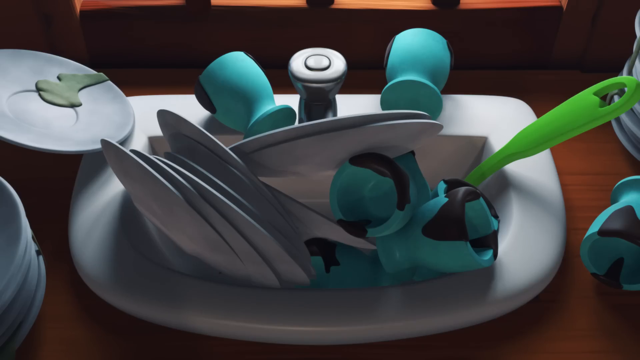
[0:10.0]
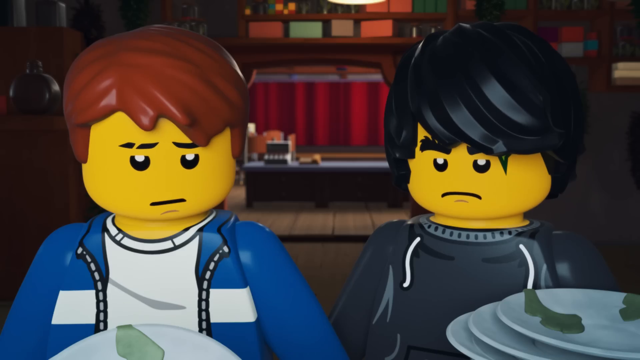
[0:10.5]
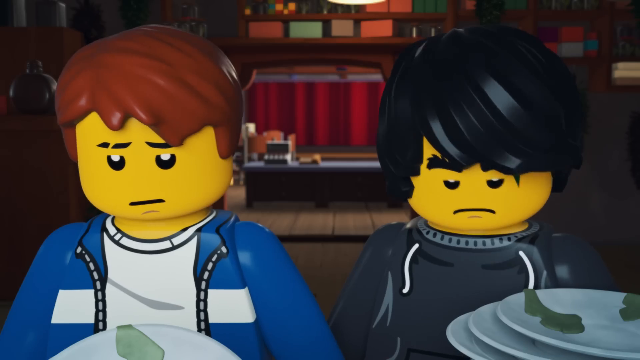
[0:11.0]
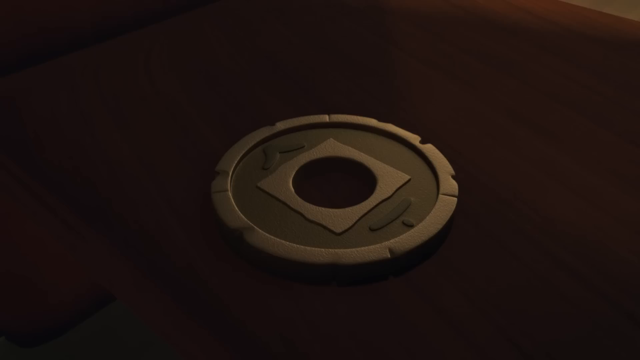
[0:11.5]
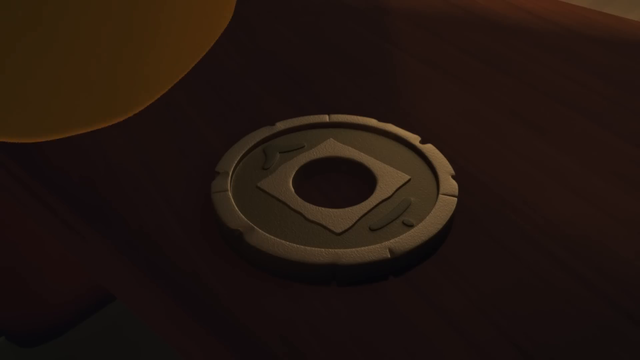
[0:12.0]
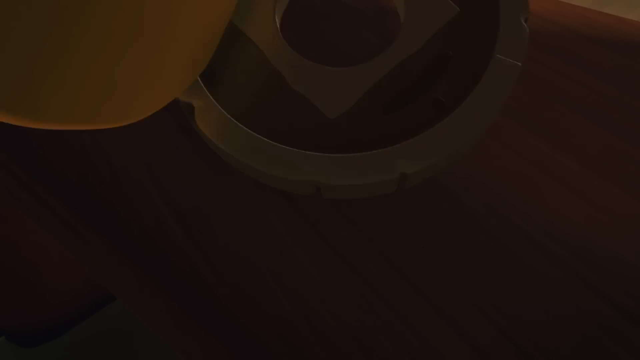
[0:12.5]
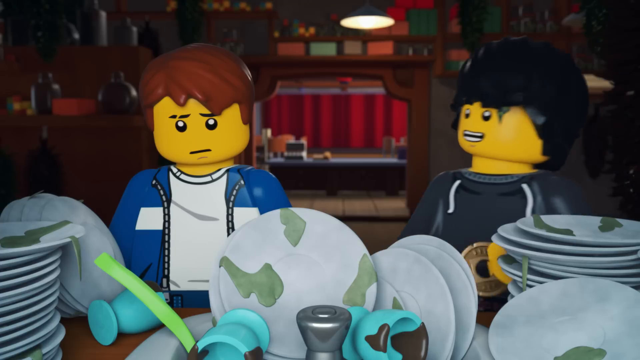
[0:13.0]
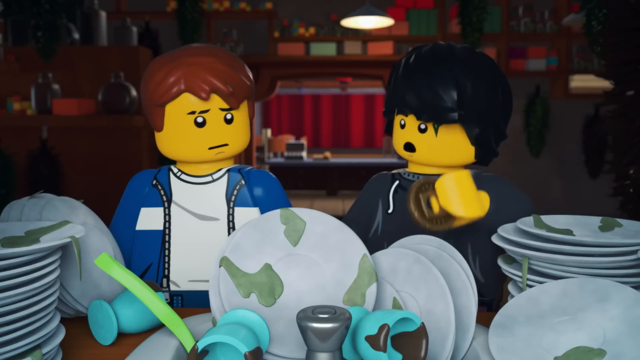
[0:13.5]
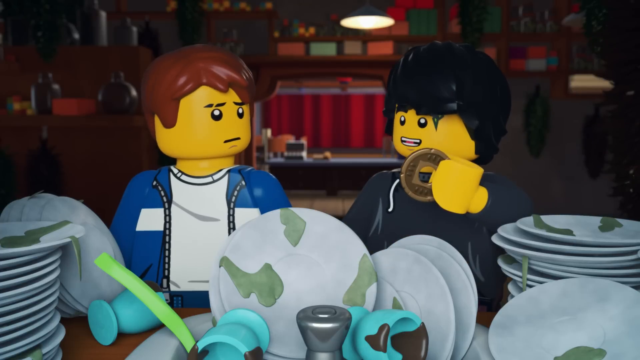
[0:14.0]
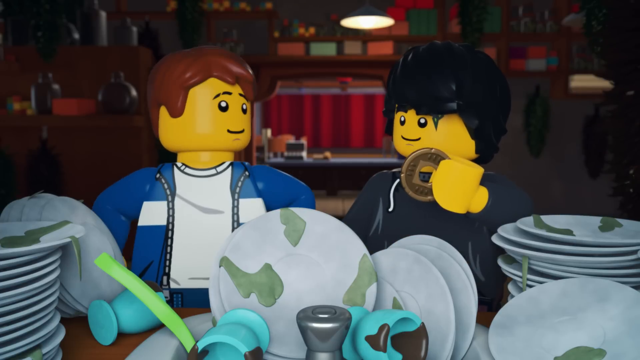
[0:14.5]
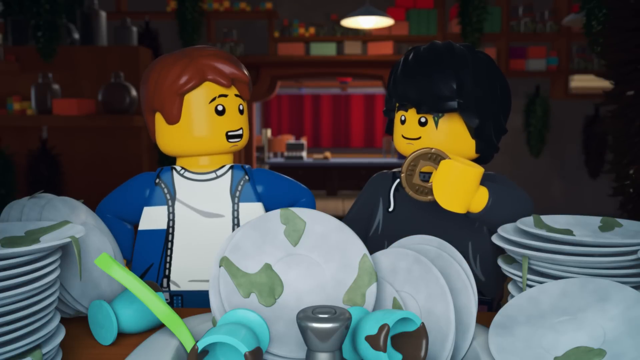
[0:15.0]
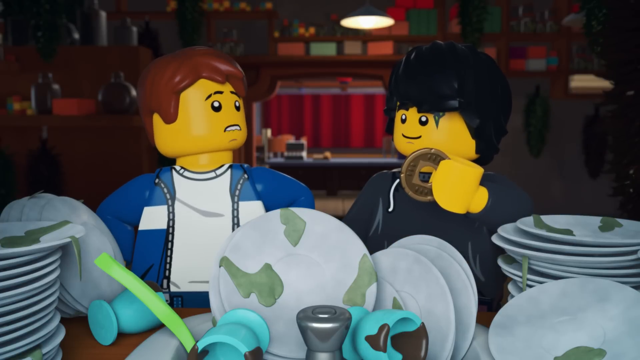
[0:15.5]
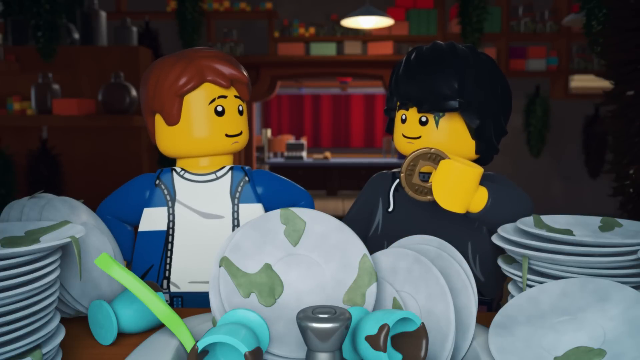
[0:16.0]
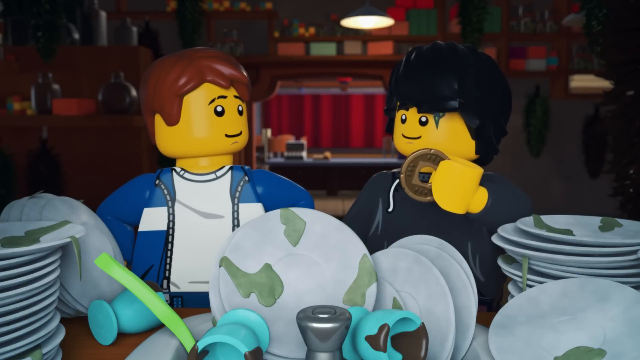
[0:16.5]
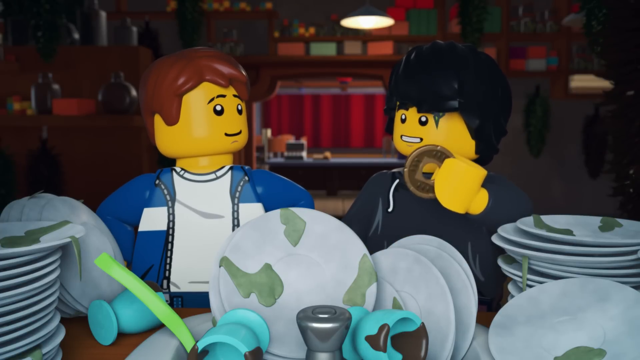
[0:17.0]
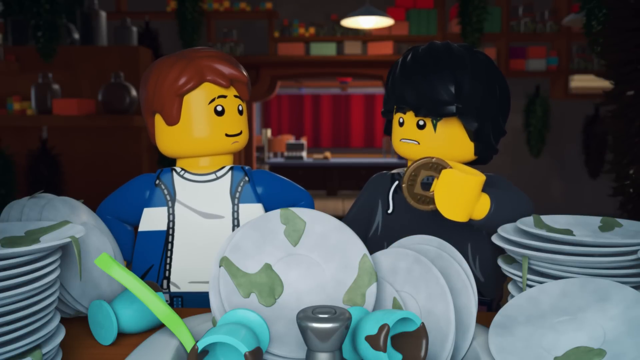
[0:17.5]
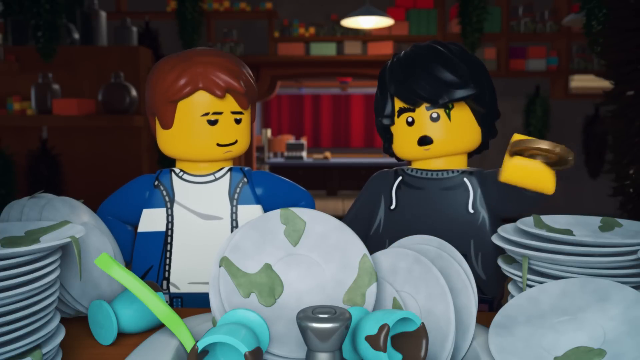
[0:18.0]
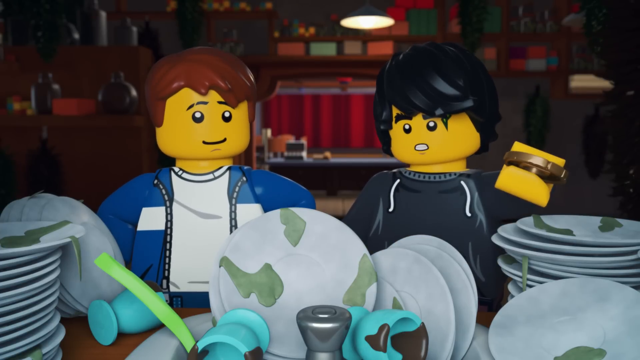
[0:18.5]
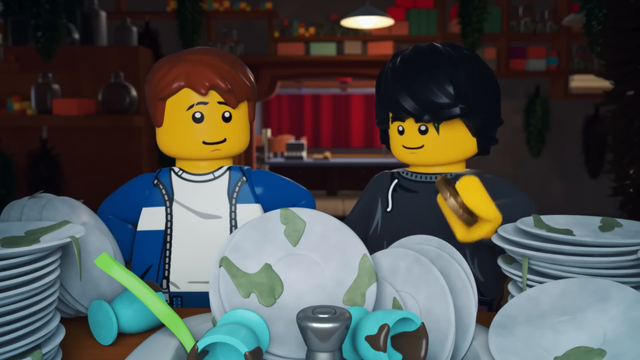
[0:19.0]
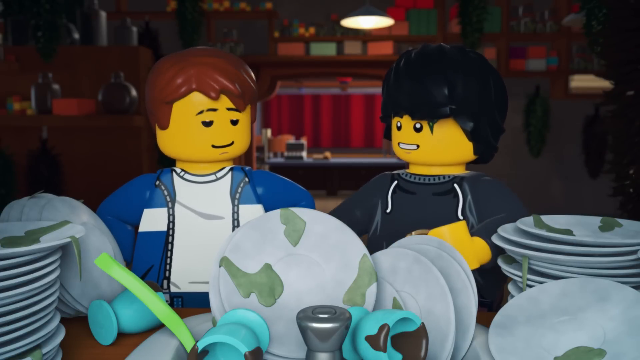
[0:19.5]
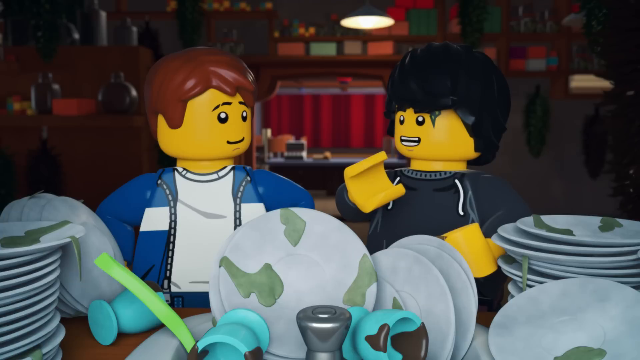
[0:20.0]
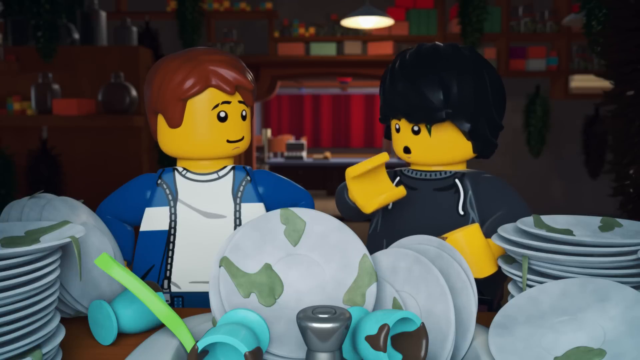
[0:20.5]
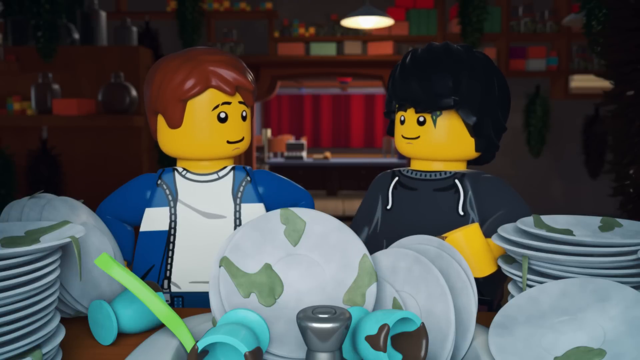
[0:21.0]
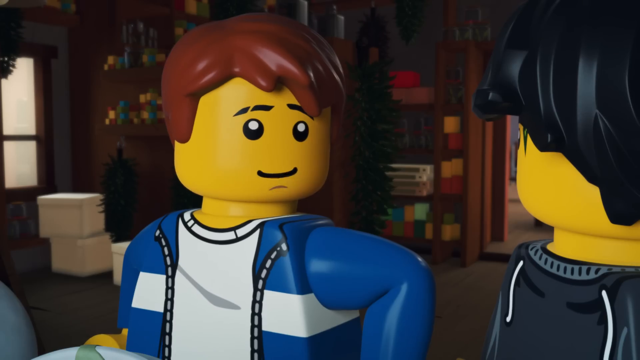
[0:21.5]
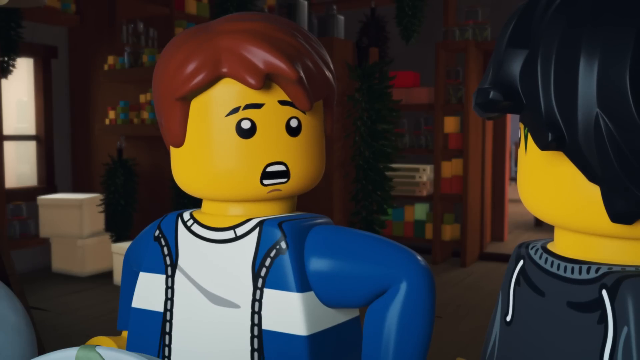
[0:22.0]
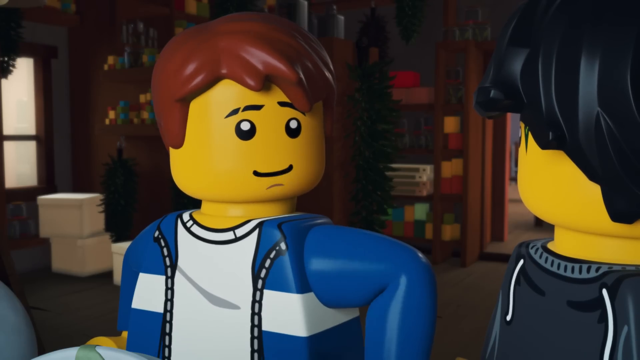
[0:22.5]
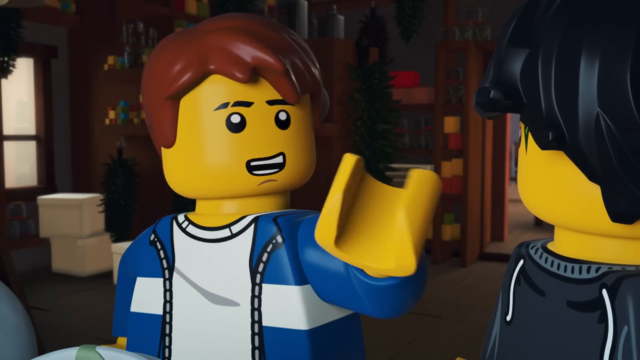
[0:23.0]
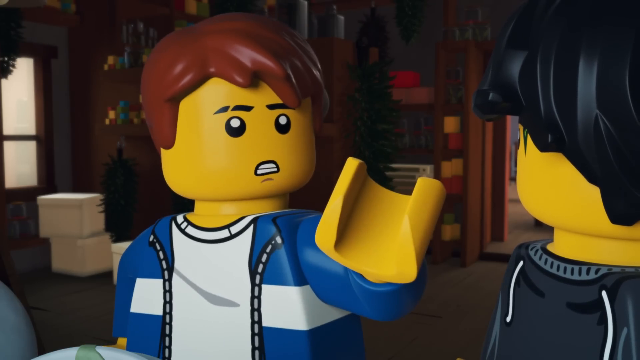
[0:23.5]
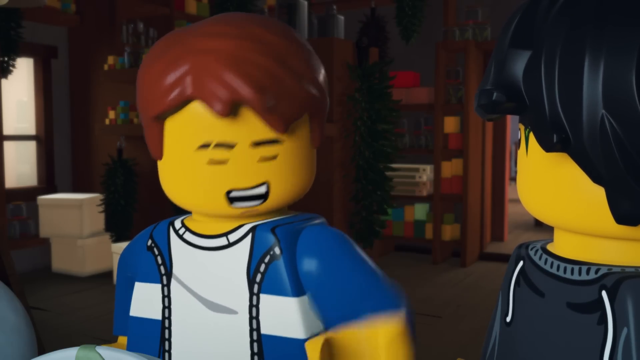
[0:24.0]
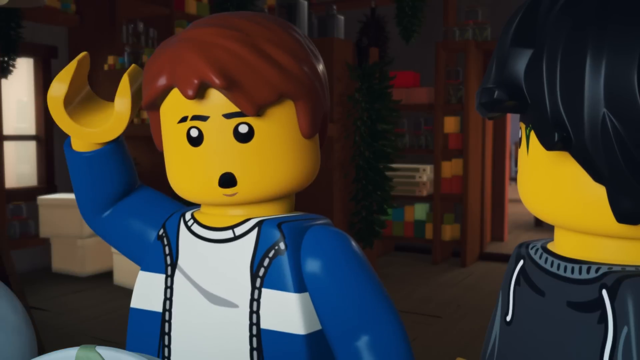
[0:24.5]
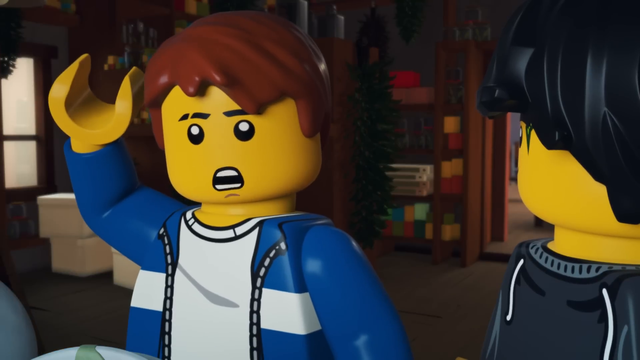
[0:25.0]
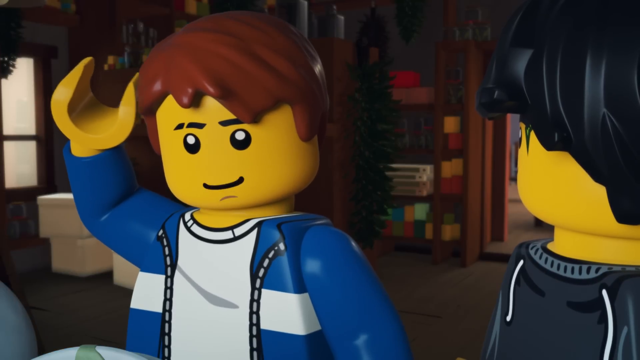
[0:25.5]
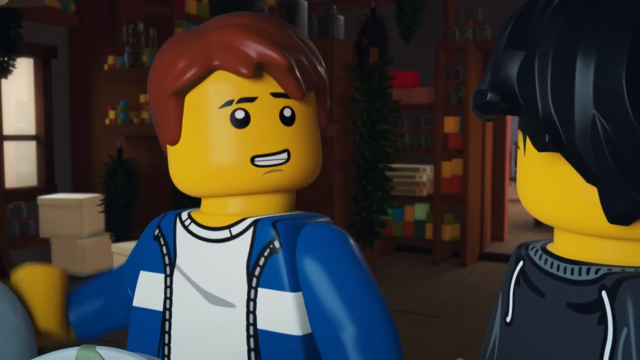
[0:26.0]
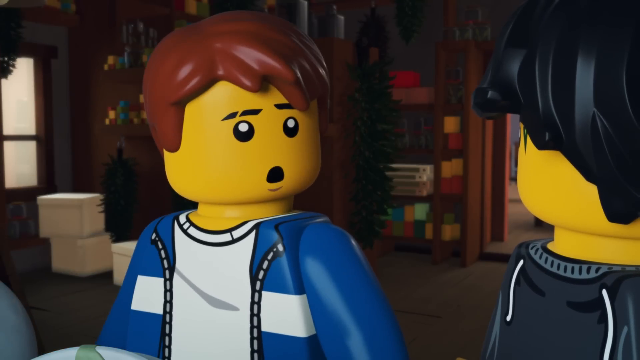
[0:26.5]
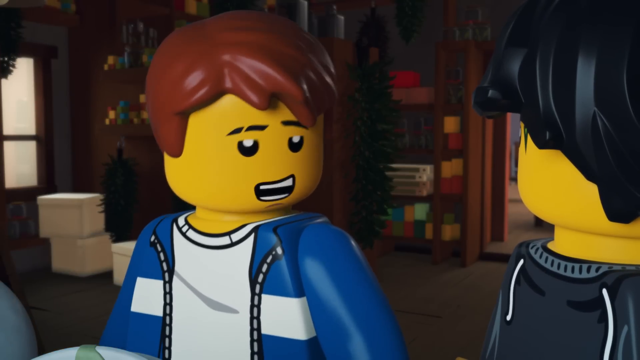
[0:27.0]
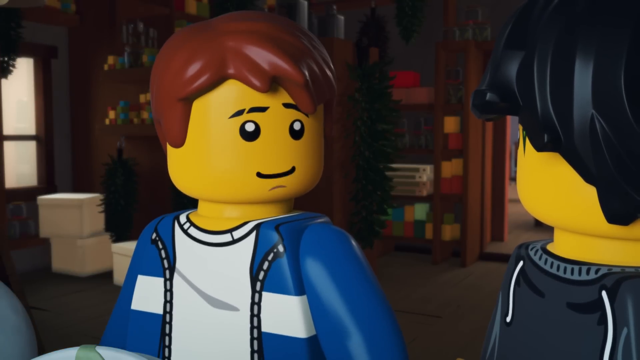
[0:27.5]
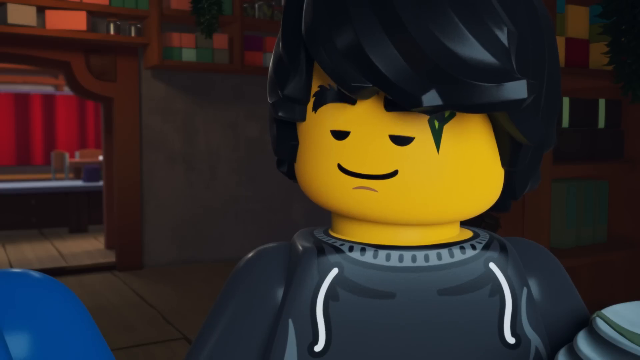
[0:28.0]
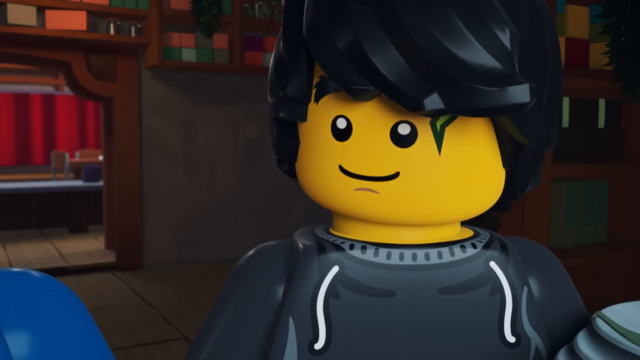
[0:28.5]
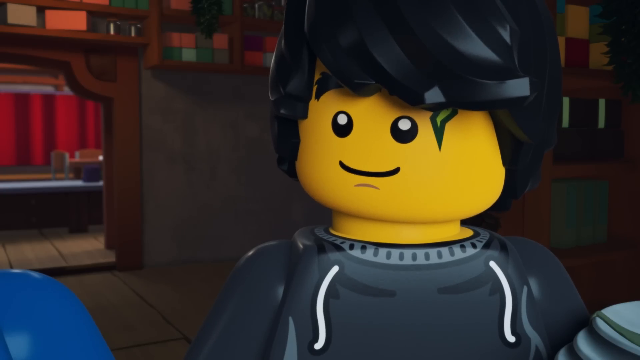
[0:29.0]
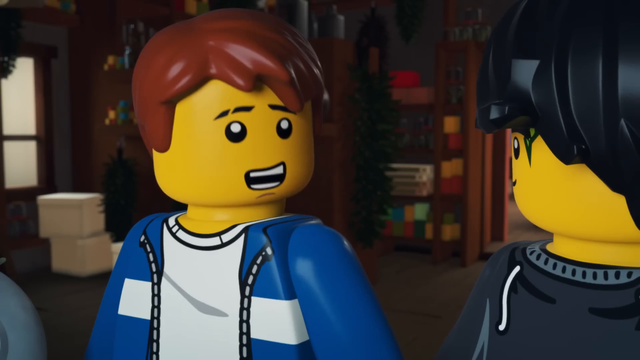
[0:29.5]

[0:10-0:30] In this animated Lego video, the characters are stacked in a sort of tower at the start. A building then appears that kind of looks like a restaurant: the sink is very full of dishes, and the waitress does not look happy about it. It seems someone has piled the dishes there for him to wash. The person standing next to him shows him a shiny item that kind of looks like a coin and points him to the dishes, and the waitress's mood instantly changes. He then has a neutral expression on his face and apparently agrees to wash the dishes.